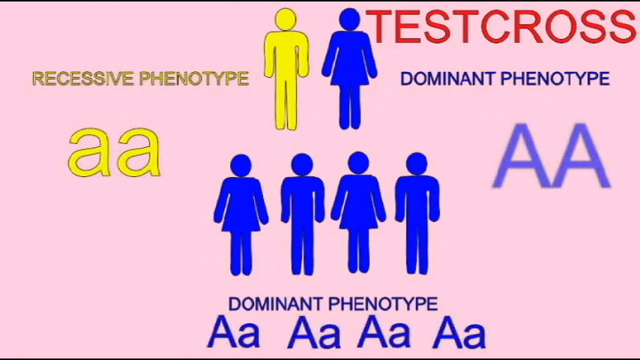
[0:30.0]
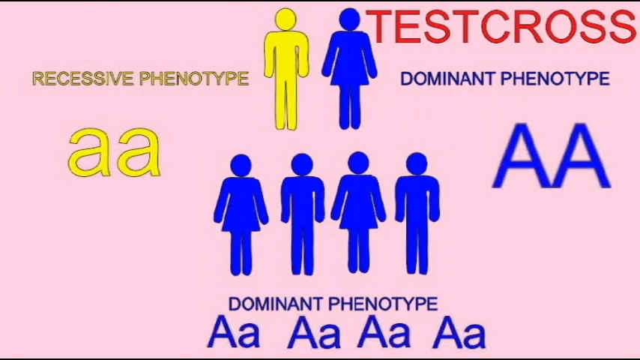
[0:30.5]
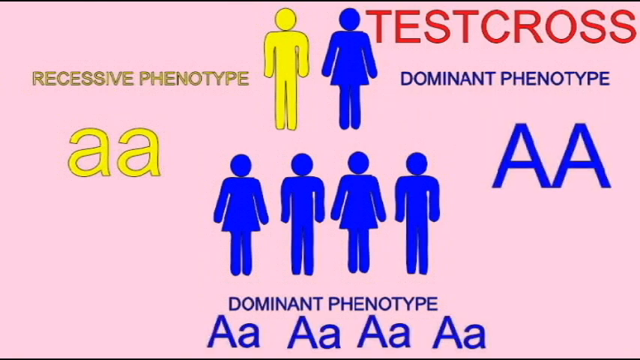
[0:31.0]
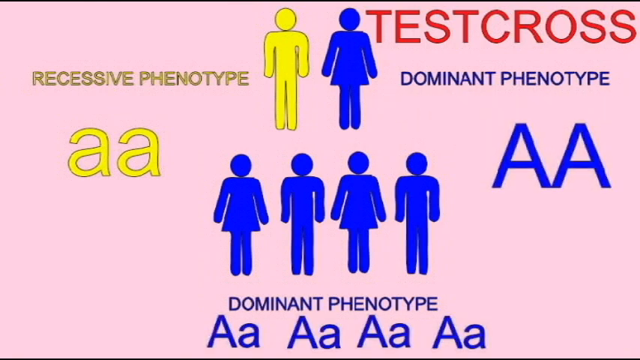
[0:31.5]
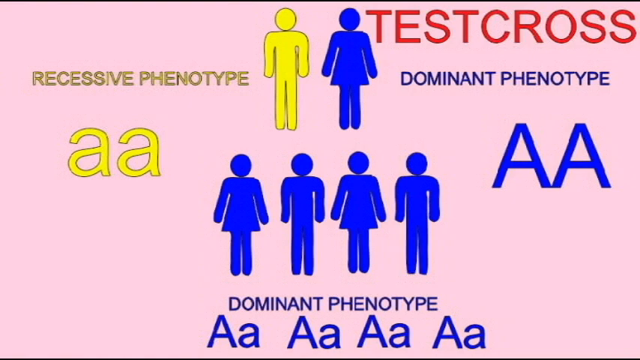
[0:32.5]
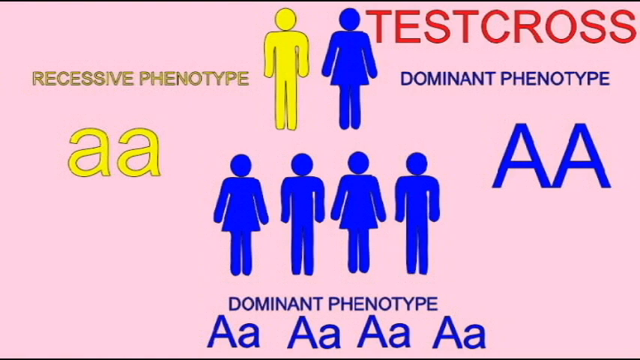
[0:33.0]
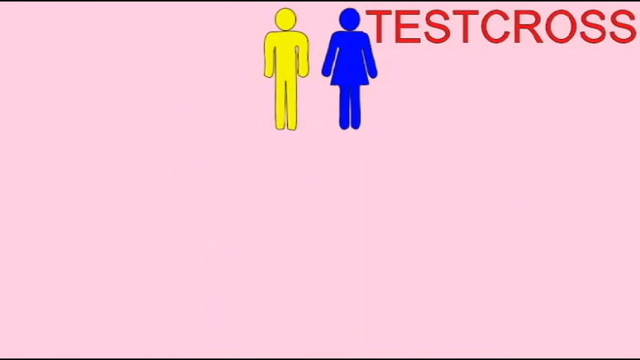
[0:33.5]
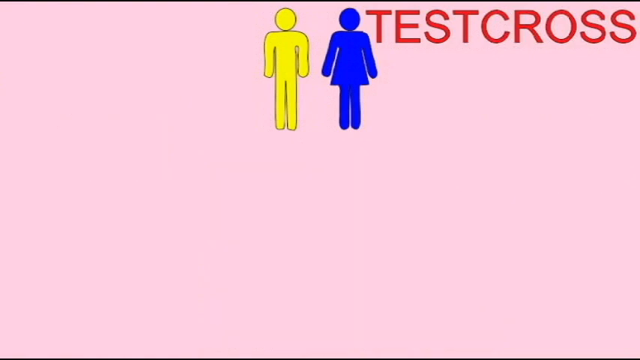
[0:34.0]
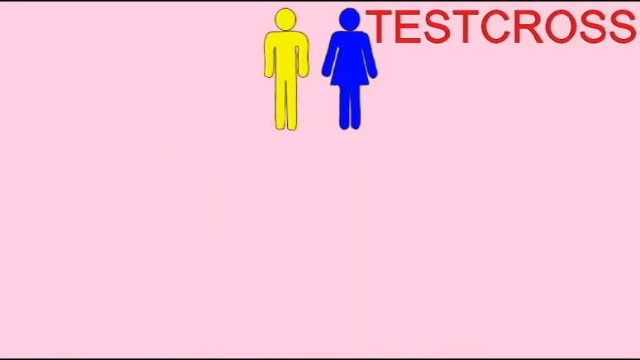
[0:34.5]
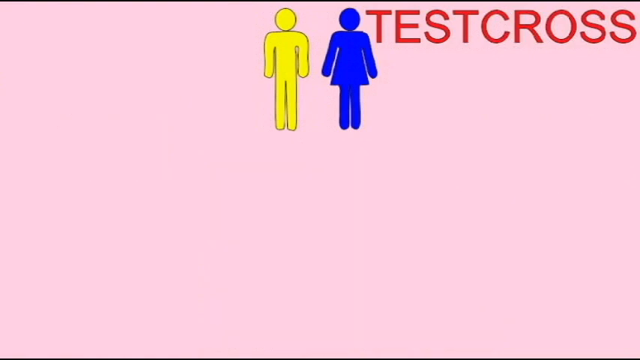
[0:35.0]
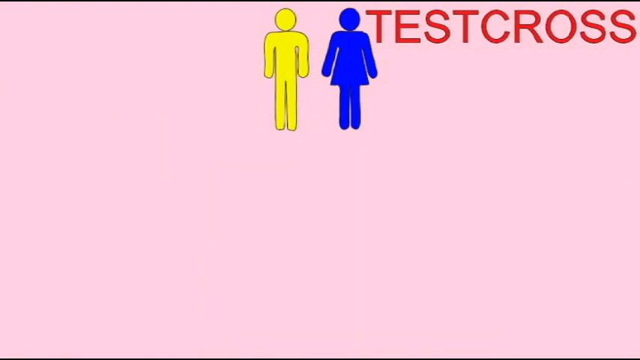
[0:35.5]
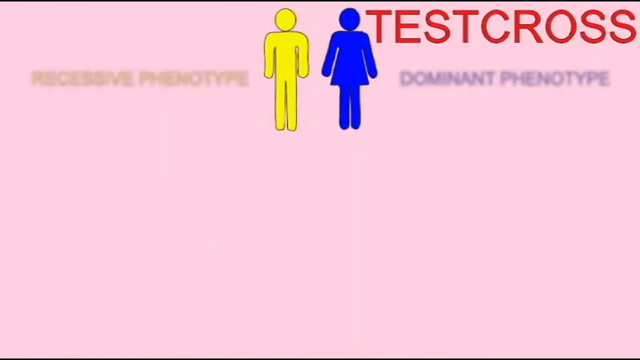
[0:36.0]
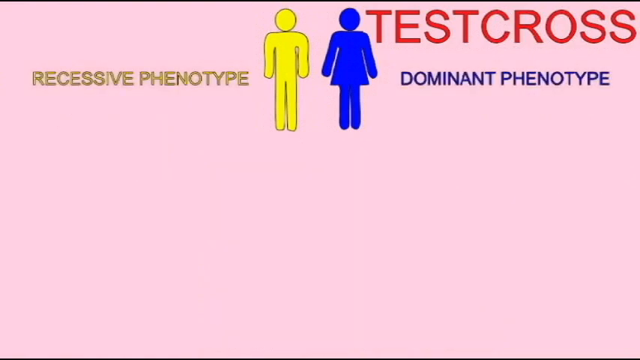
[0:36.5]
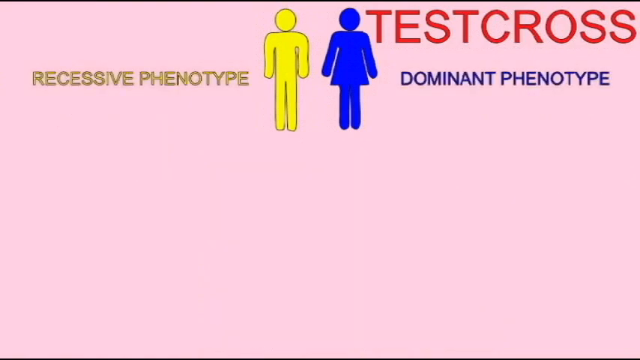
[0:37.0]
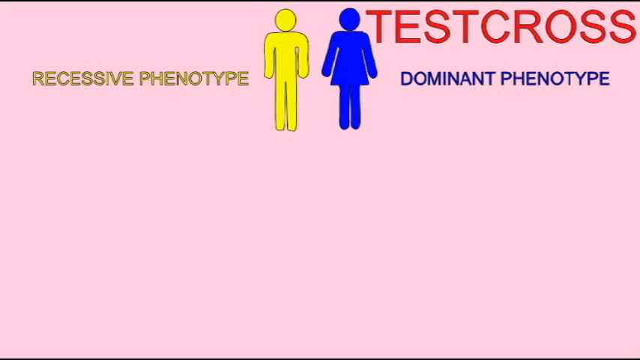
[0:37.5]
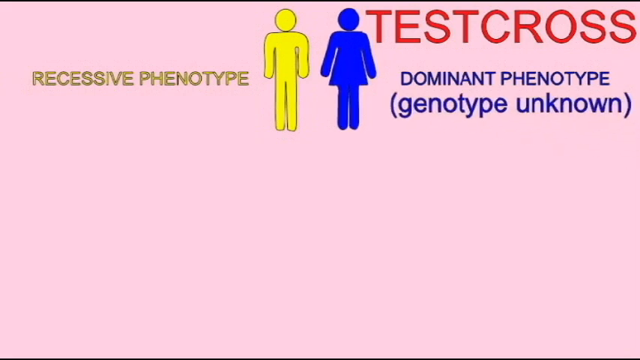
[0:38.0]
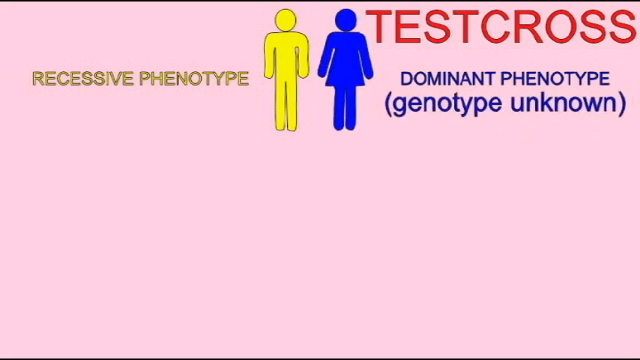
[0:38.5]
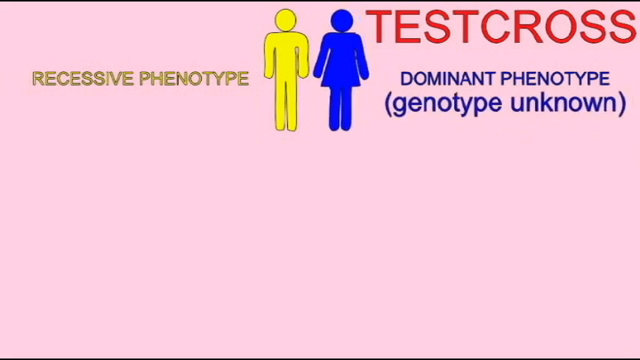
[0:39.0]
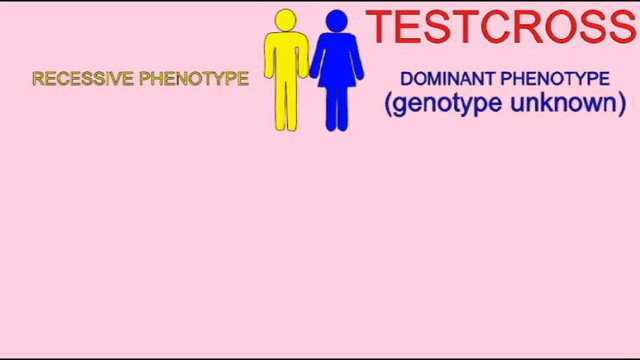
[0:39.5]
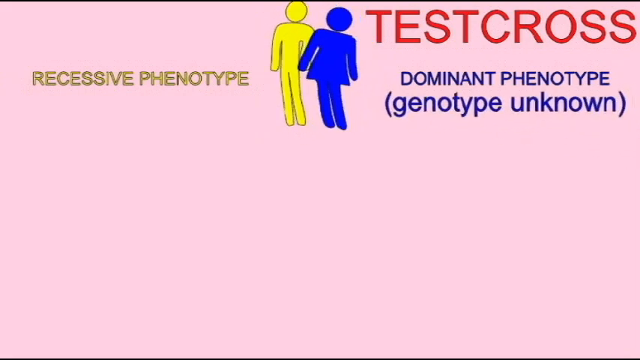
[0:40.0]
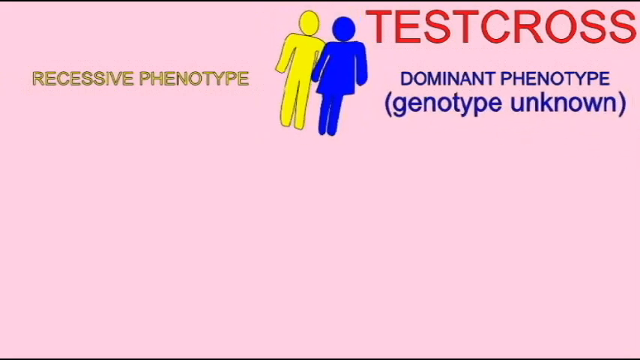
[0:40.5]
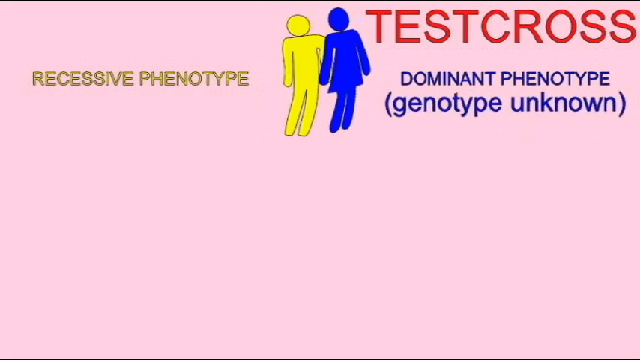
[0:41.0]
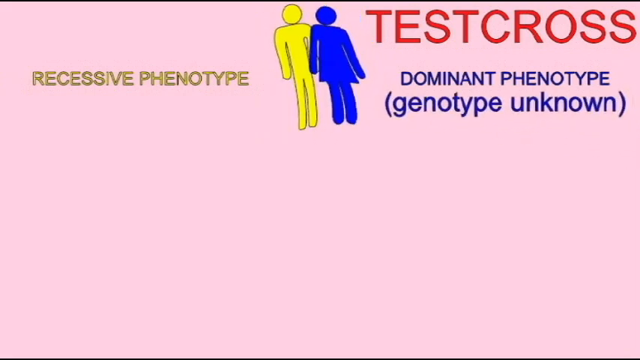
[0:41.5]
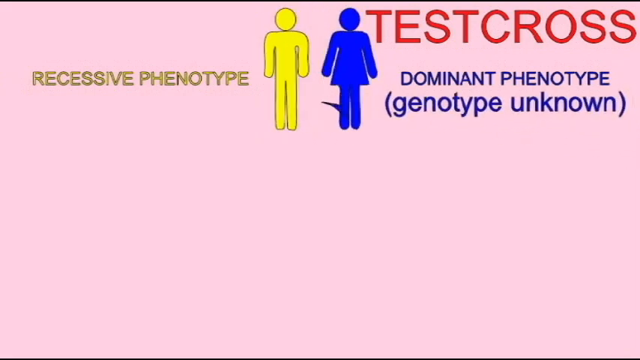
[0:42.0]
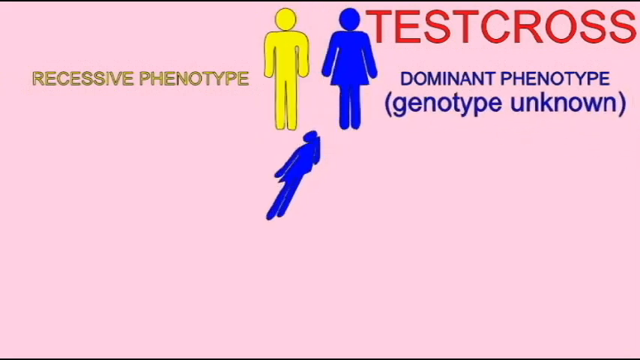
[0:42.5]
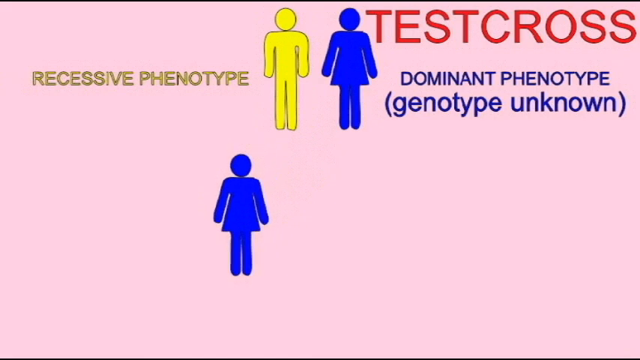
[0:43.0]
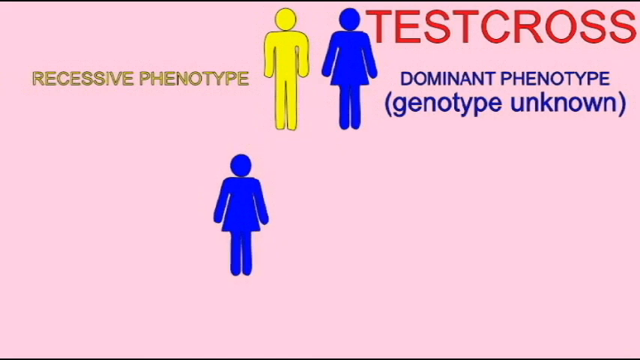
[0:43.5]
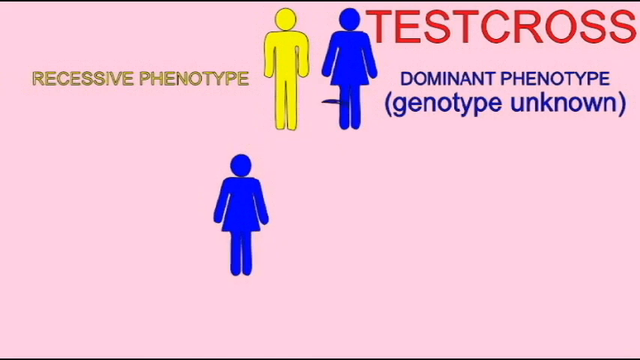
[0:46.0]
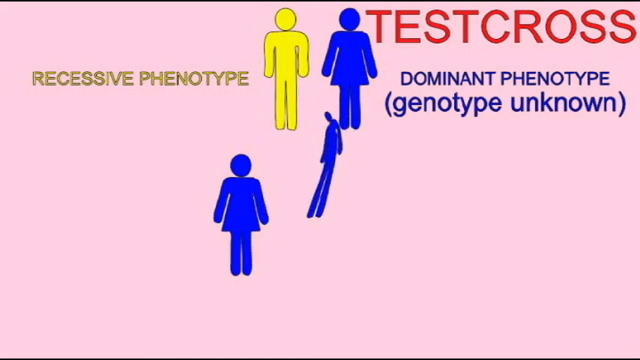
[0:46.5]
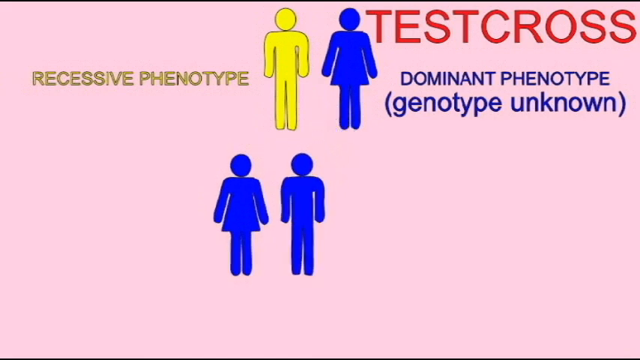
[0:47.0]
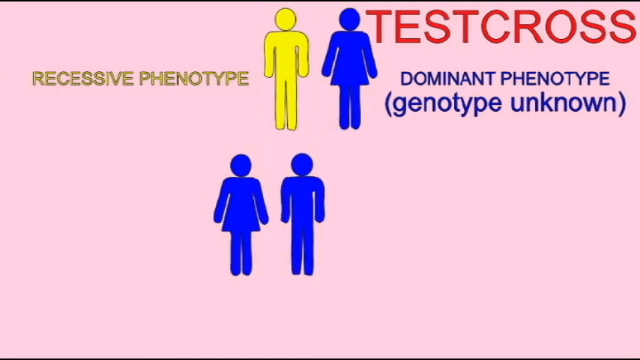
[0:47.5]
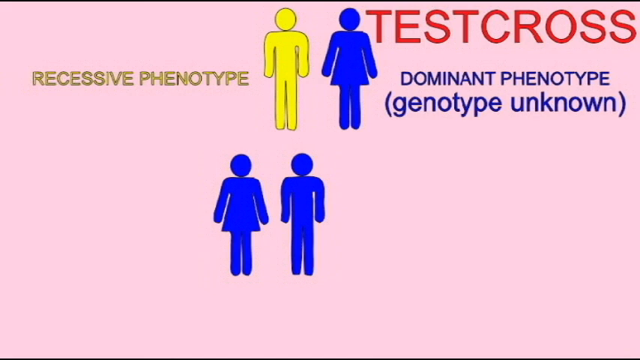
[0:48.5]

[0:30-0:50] On the left side, "recessive phenotype" is written, and on the right side "test cross" is written in red. At the bottom are the words "dominant phenotype" and "genotype unknown". The background is pink. The yellow man and the blue woman mingle together to form another image, a female in blue. They mingle again to form an image of a male in blue, and another image forms so that there are two males and two females. On the left side are two faces in yellow and on the right side two faces in blue, with "dominant phenotype" written at the bottom.